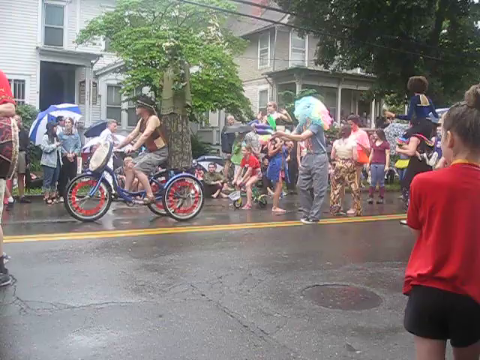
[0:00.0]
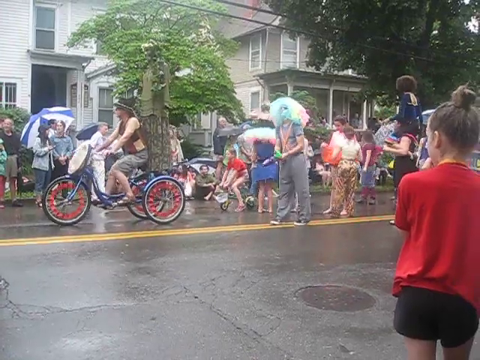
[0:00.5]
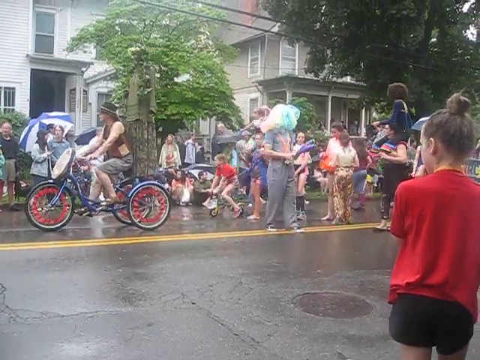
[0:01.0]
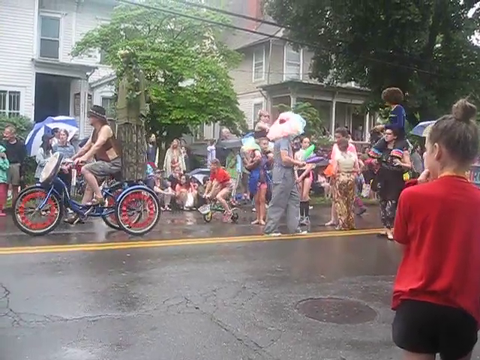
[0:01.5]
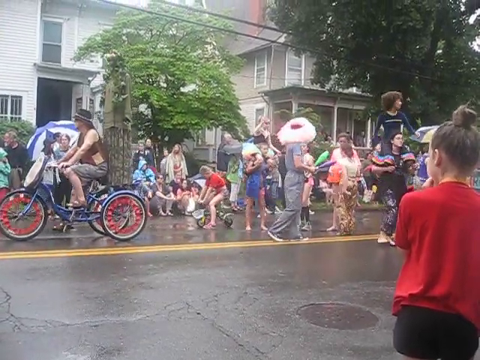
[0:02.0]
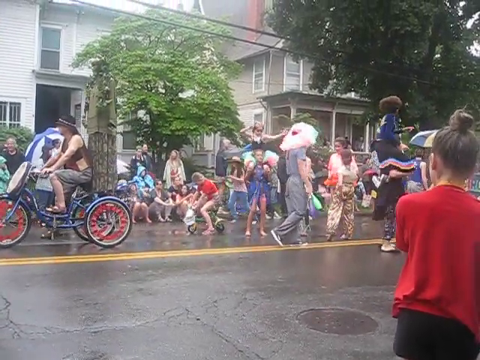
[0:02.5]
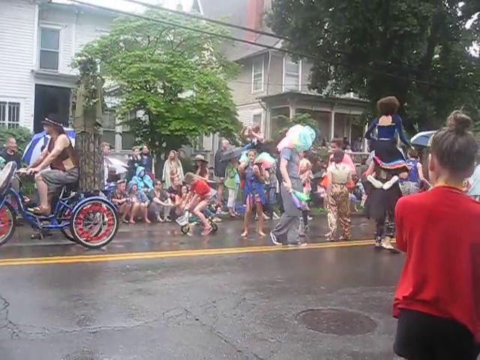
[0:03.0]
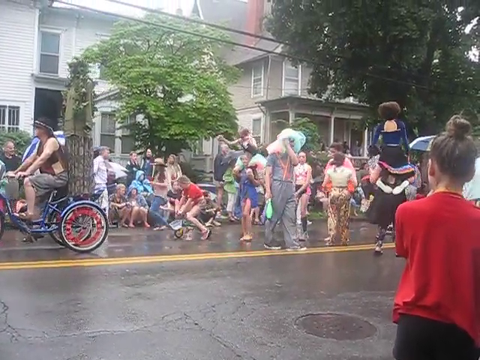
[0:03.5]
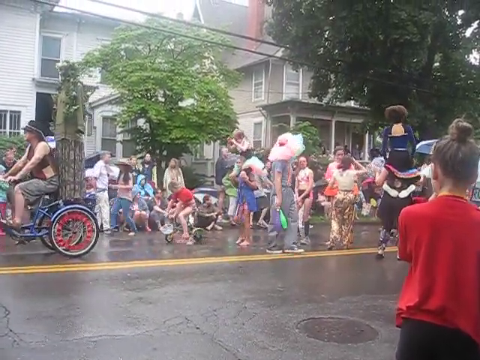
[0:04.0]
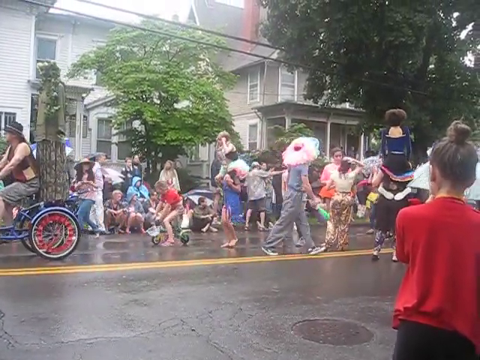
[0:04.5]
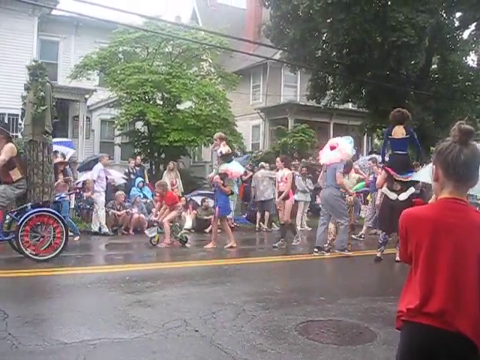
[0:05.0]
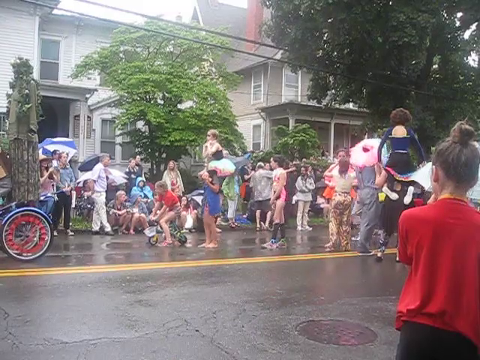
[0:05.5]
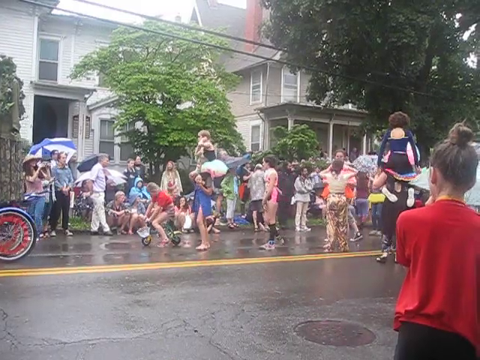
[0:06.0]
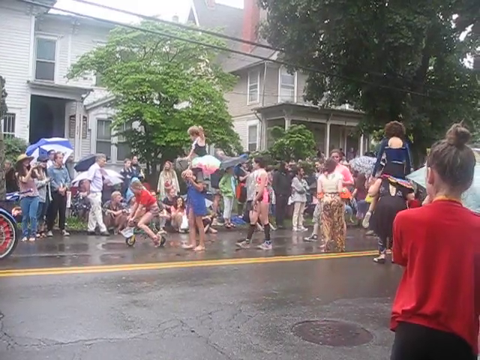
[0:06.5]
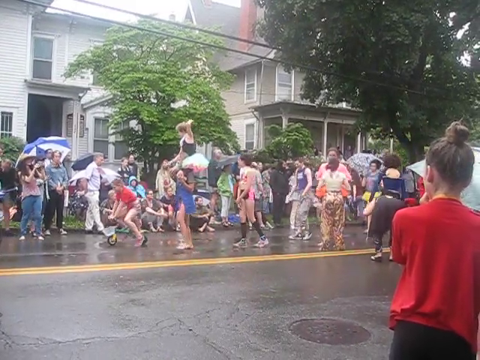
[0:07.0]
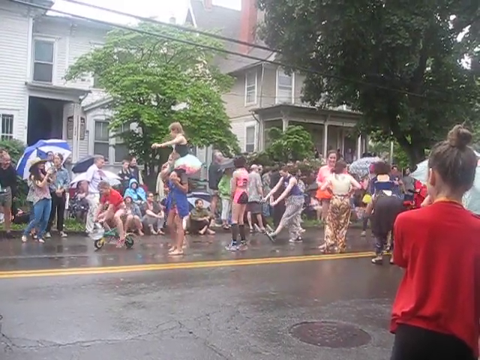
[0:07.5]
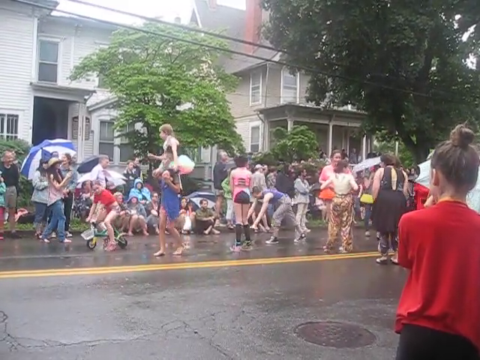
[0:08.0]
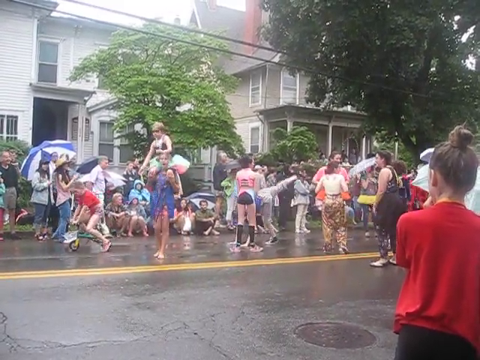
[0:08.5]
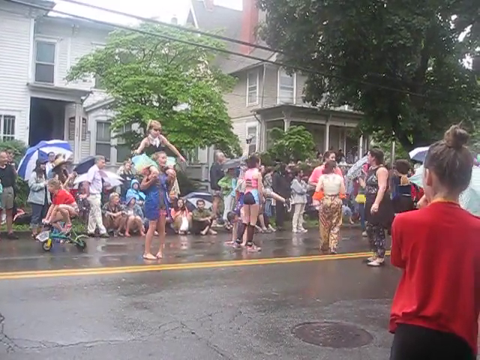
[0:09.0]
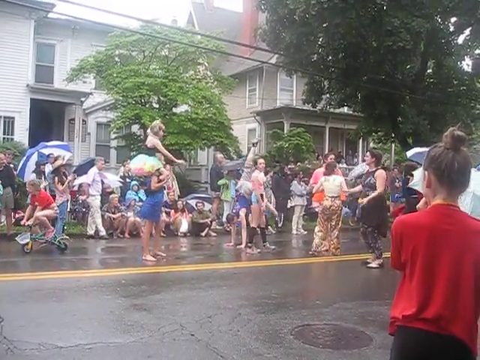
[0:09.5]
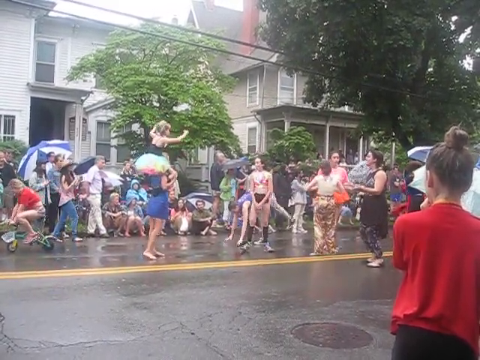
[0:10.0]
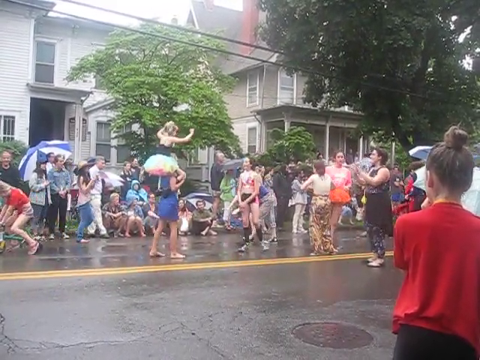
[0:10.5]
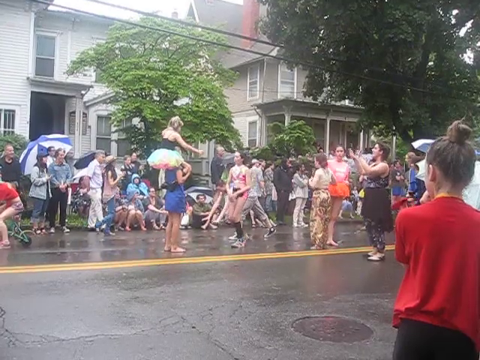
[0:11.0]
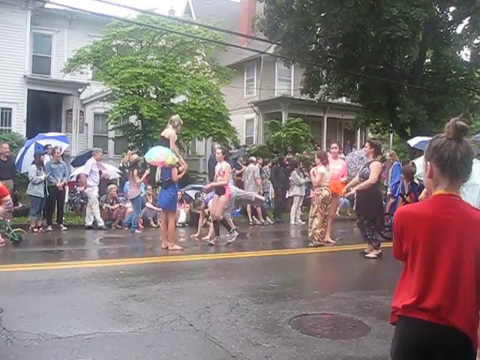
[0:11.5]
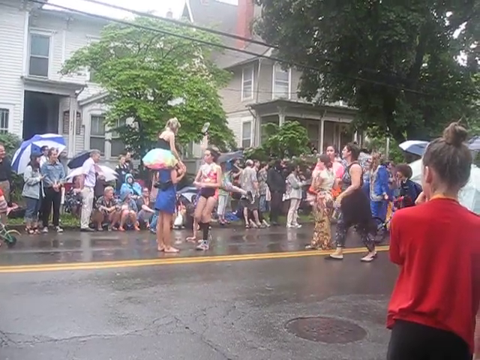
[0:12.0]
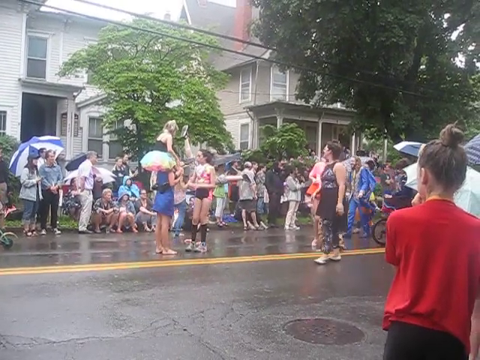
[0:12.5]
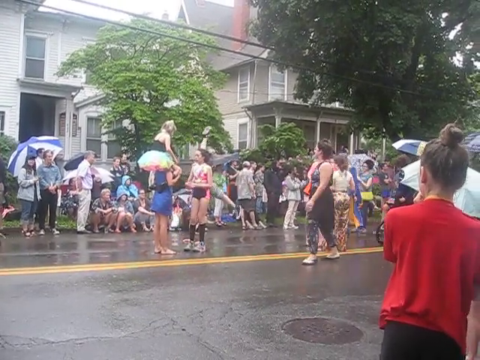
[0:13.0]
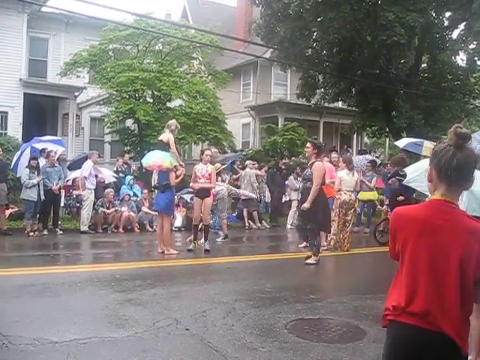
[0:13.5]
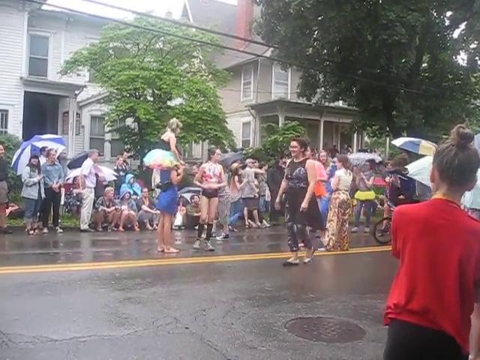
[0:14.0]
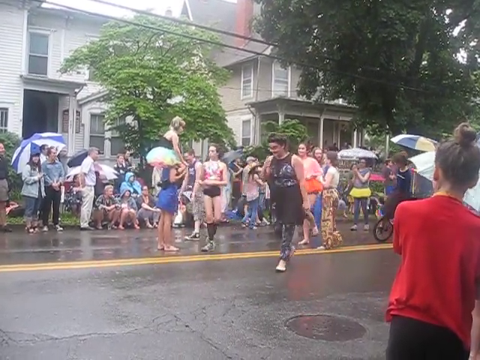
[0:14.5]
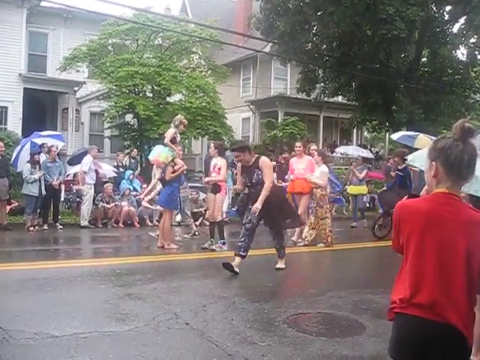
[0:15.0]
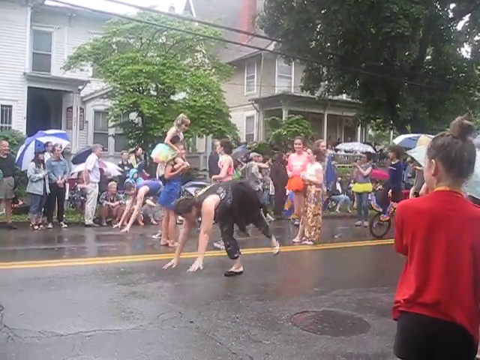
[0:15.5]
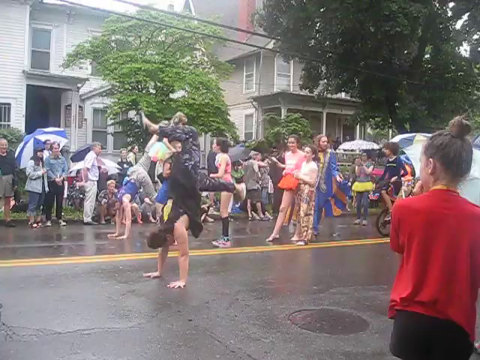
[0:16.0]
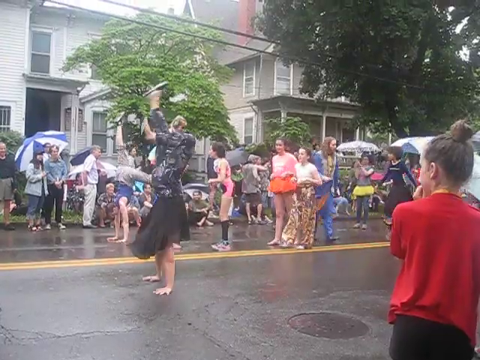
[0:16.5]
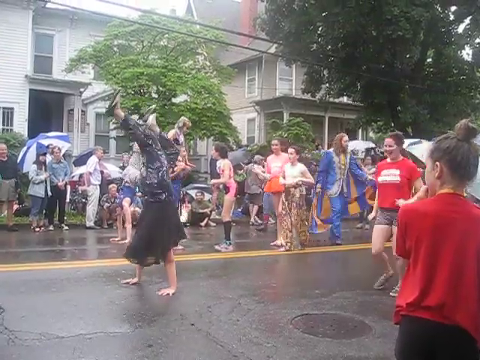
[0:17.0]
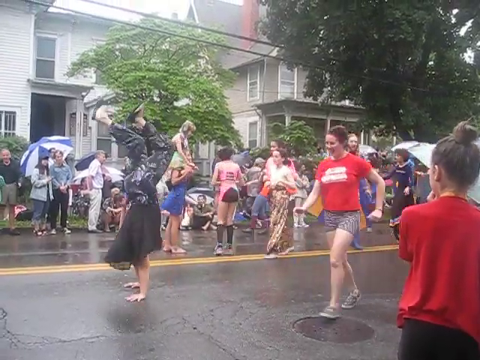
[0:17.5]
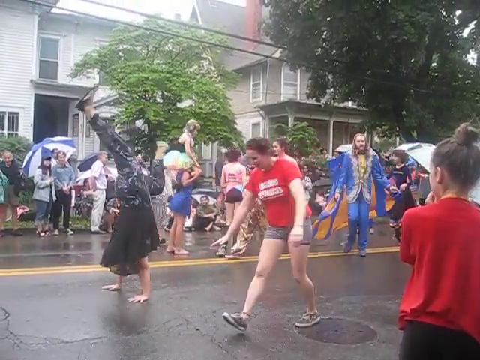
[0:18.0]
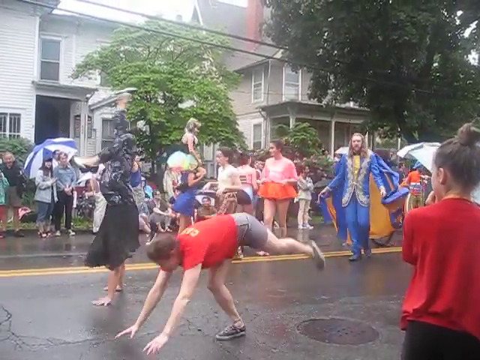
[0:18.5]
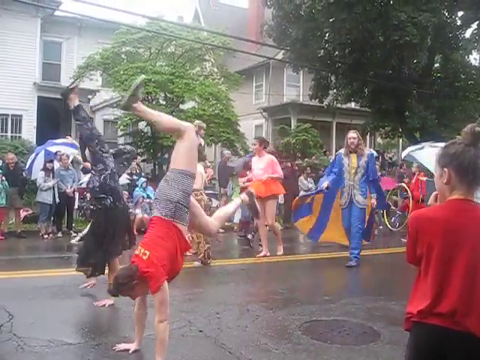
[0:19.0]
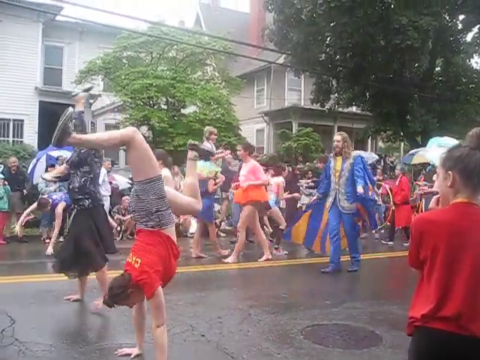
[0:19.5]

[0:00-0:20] On a street outside, the road is wet; it has obviously been raining. People line the streets with umbrellas, and some sort of procession is going down the street. There is a double yellow line along the edge, and people walk just on the double yellow lines. A man rides a tricycle with a small platform on the back, and on it is a really tall man dressed in what looks like green camouflage, with leaves around his head. When the cyclist goes in front of a tree, the man can barely be seen. A girl rides a very small tricycle. Some children sit on each other's shoulders, and a group of girls dressed in leotards and kind of fancy skirts do handstands and then walk on their hands.